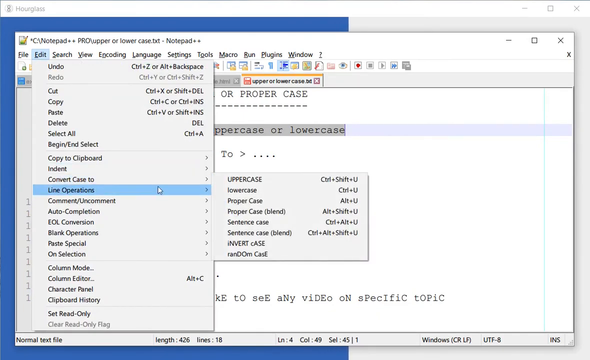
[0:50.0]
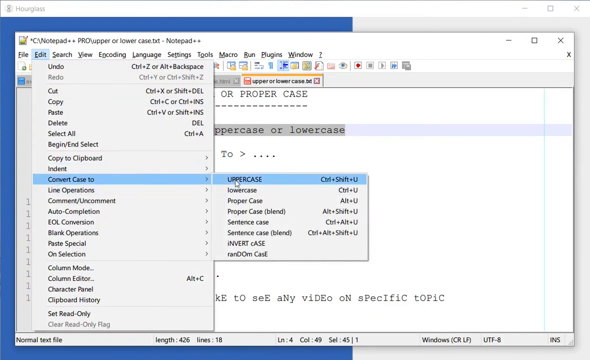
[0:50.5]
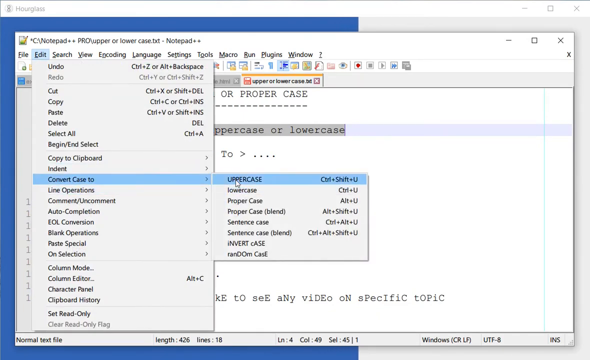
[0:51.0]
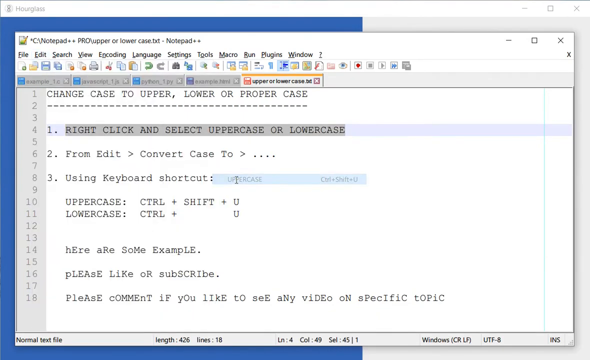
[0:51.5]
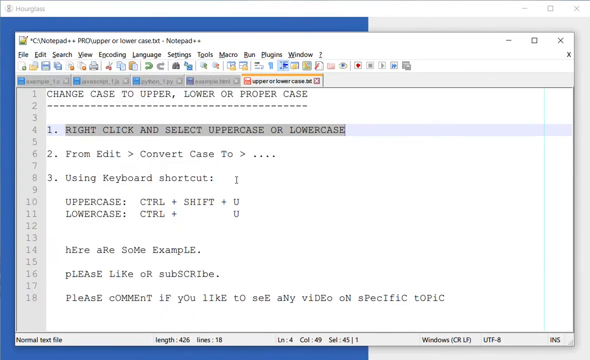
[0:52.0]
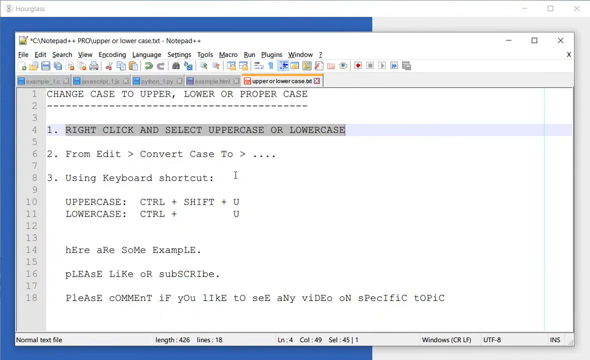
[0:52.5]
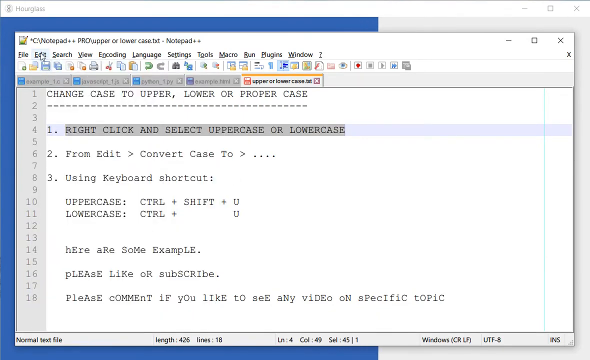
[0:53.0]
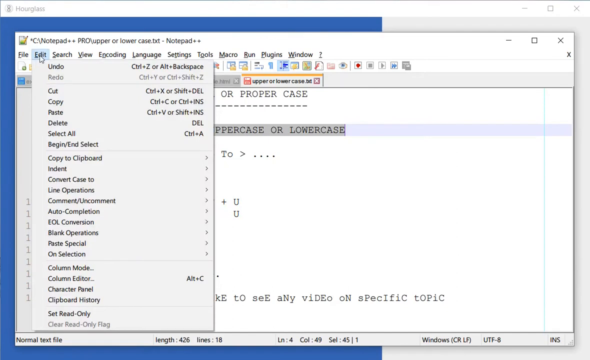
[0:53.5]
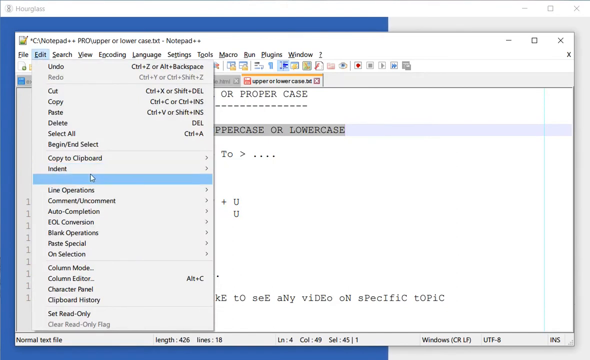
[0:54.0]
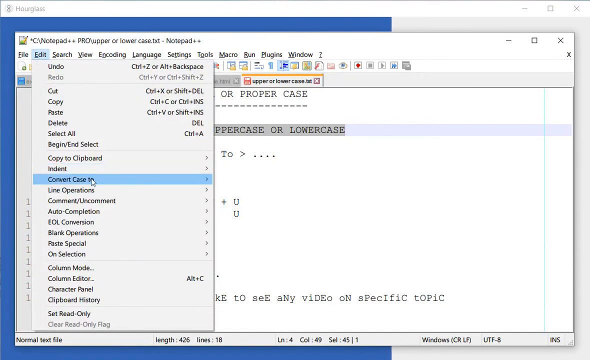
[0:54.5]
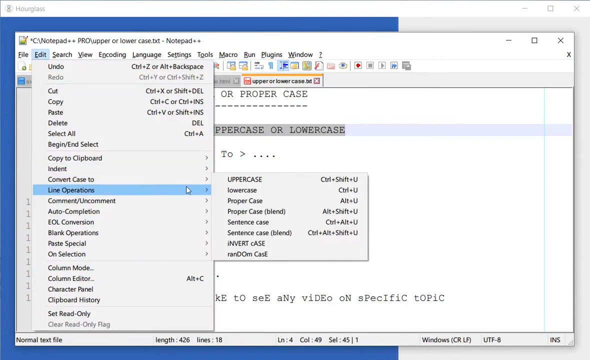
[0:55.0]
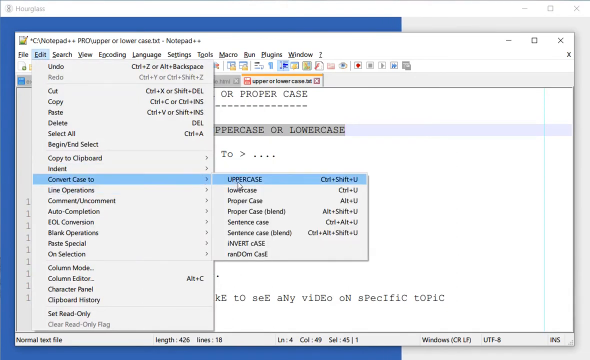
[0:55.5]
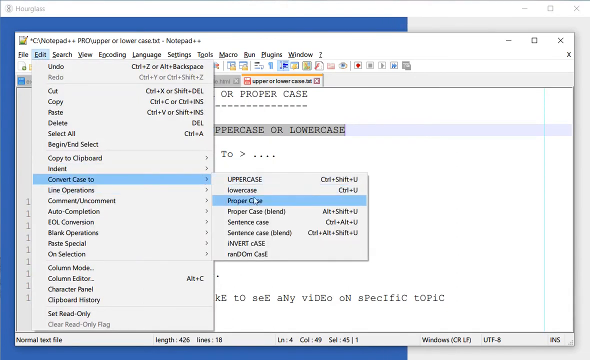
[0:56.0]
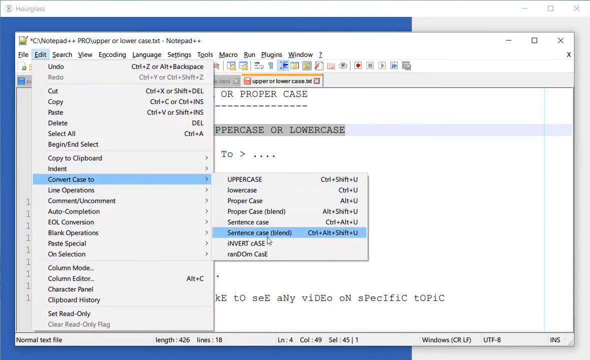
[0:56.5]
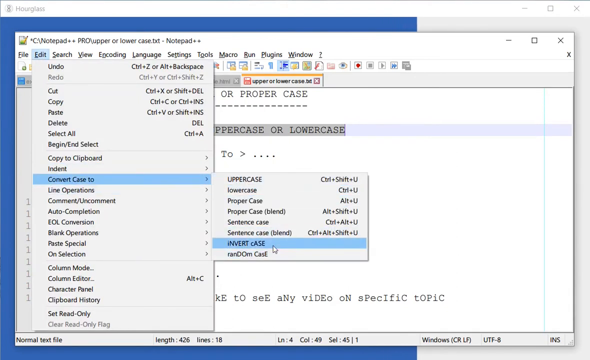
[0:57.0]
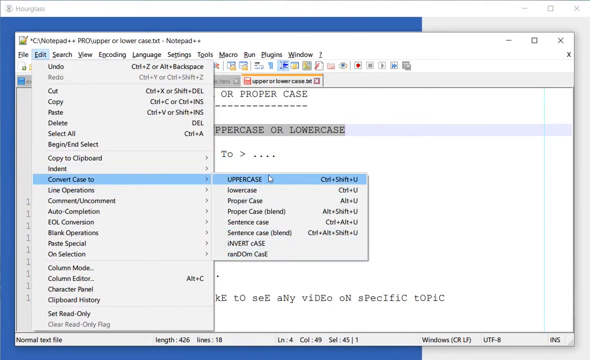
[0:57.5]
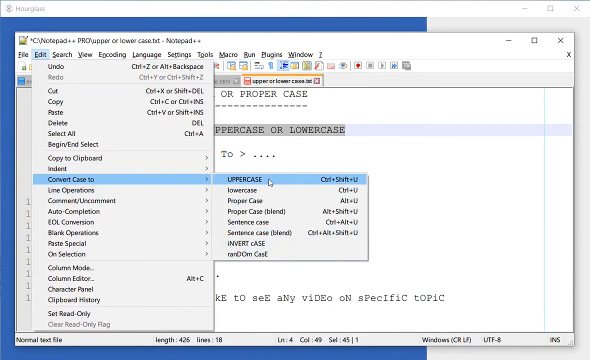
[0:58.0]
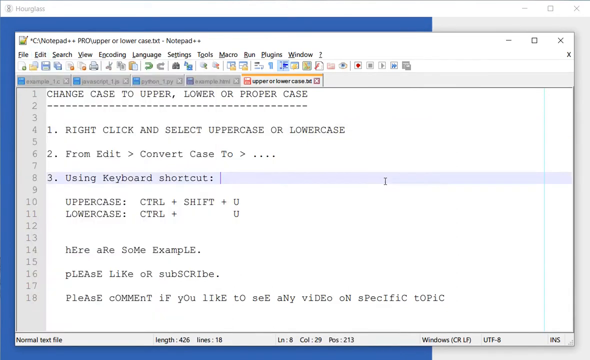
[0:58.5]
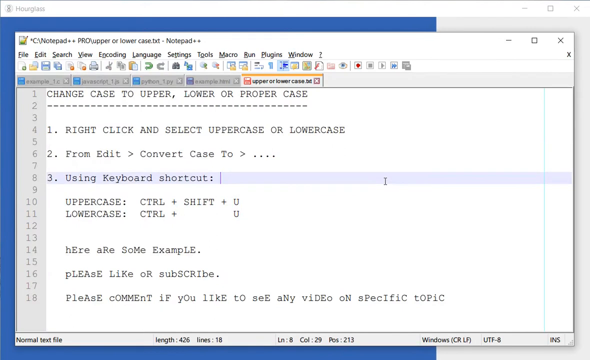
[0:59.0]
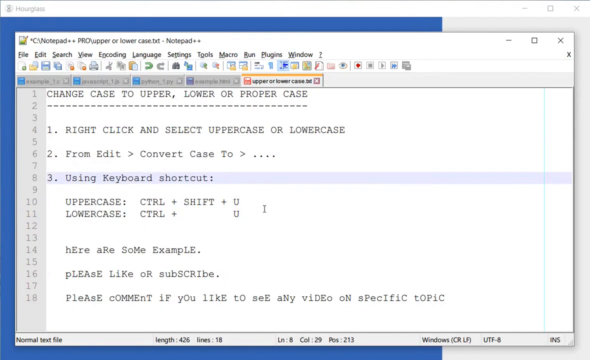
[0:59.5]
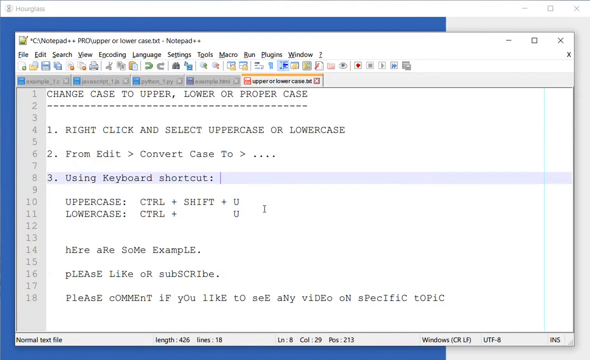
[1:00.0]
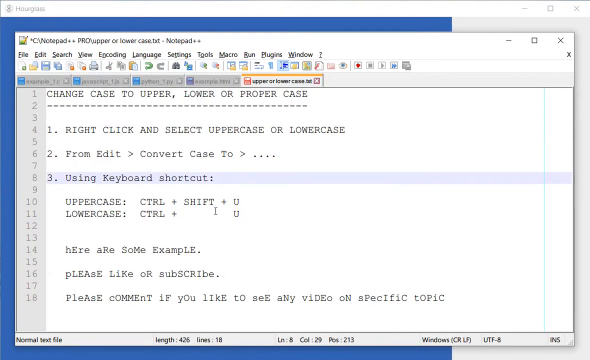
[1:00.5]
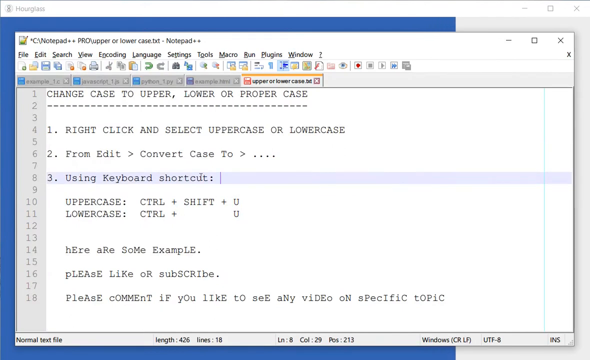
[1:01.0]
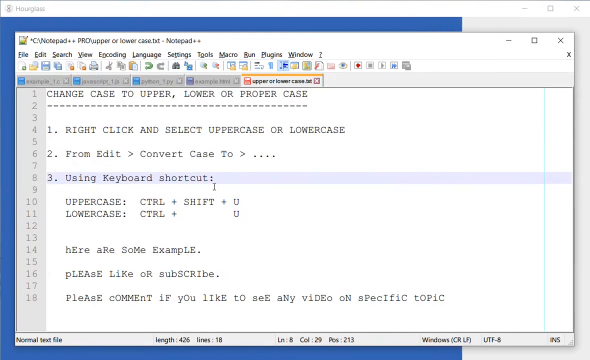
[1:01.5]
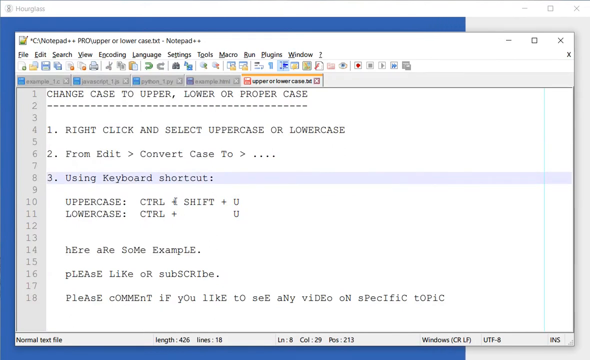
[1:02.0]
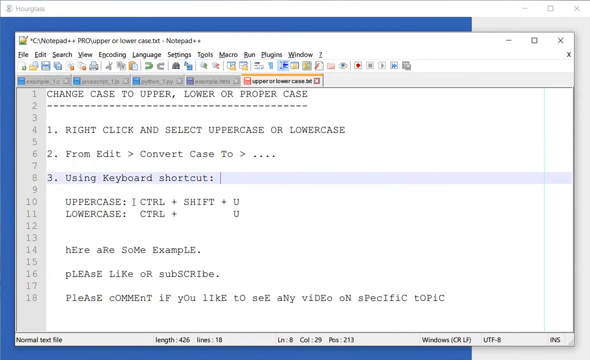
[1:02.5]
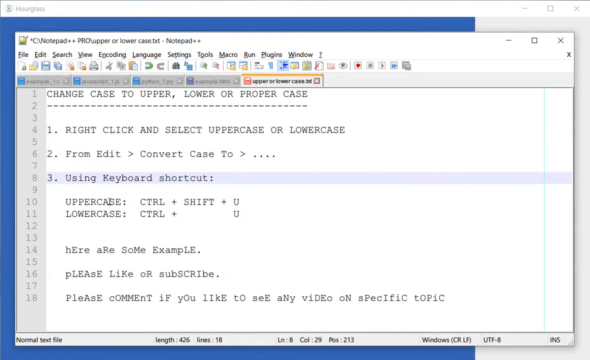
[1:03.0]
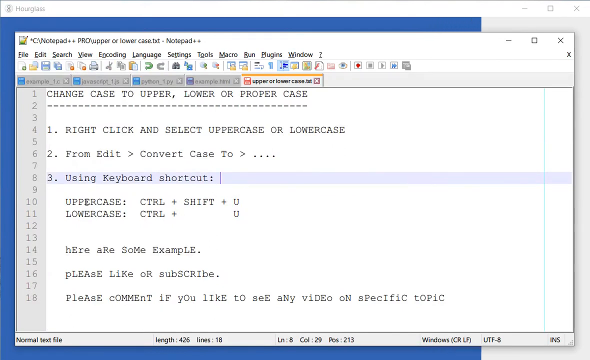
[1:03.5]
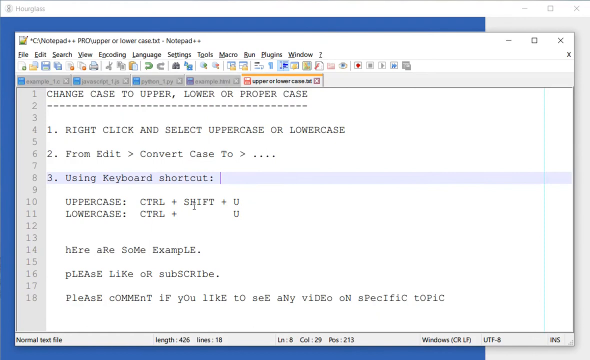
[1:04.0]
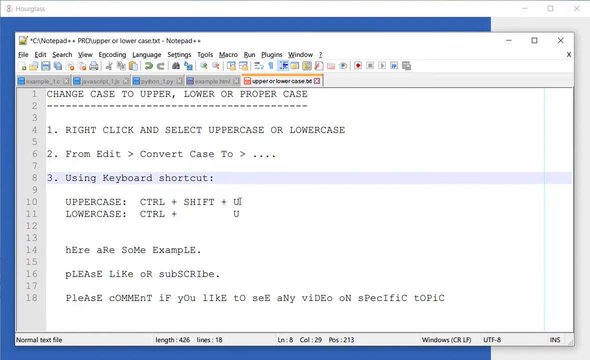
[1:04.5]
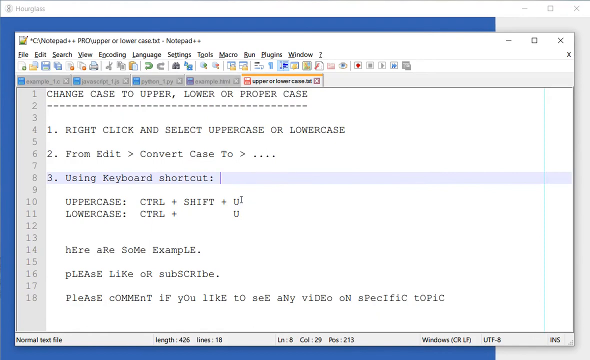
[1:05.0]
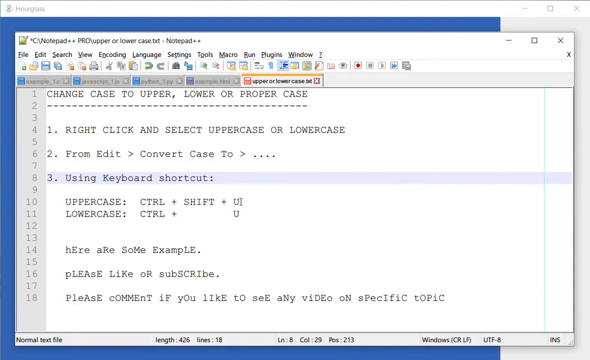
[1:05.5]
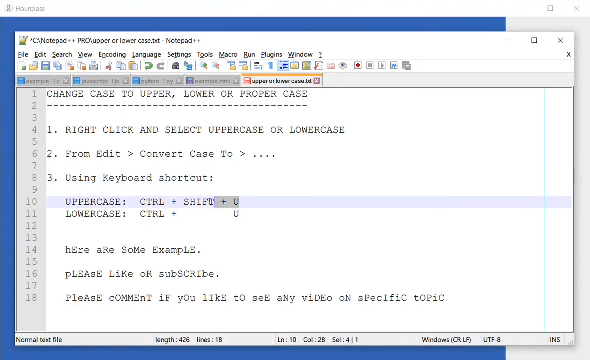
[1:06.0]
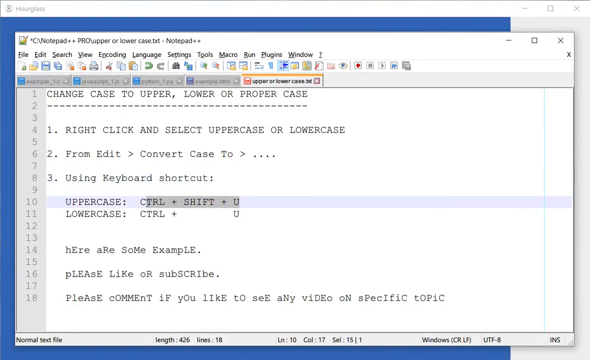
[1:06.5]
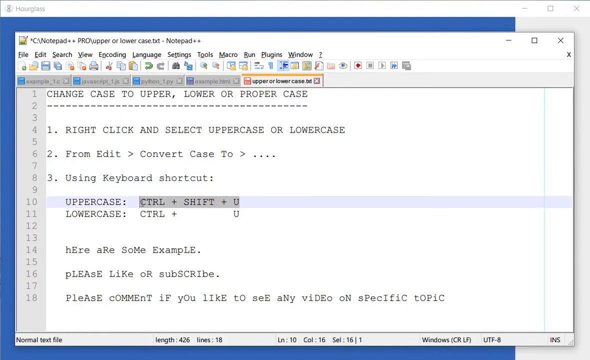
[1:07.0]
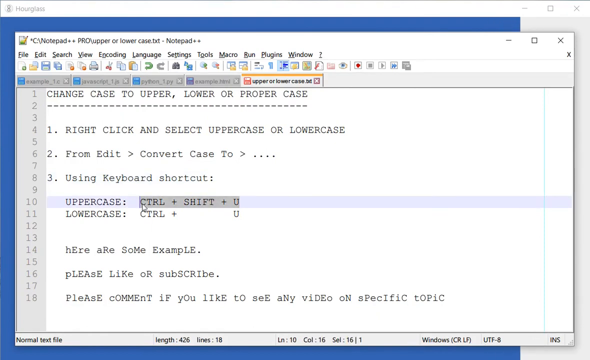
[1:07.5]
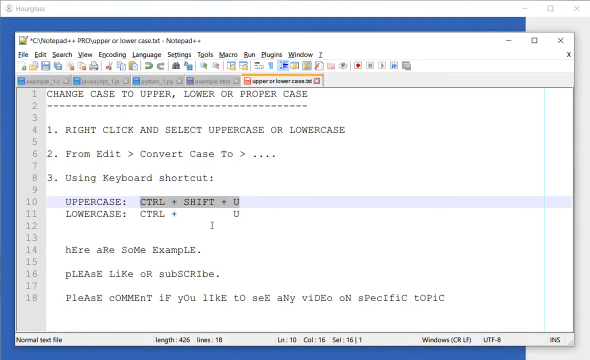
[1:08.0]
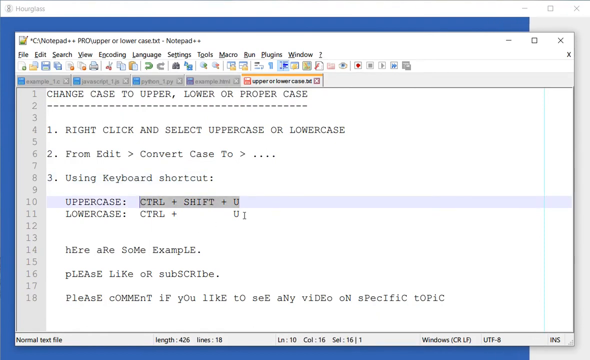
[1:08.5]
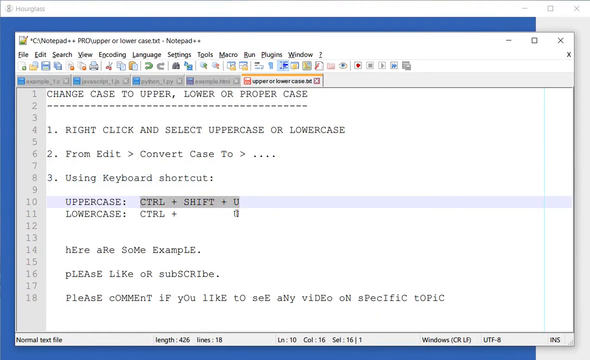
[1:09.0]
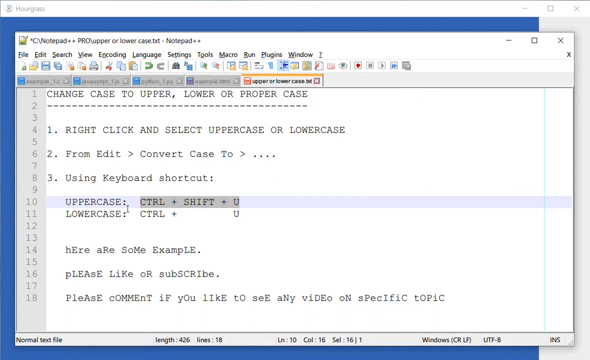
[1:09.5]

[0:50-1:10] The user continues using the toolbar to convert case. The Edit menu's Convert case to options are shown: uppercase, lowercase, proper case, sentence case, invert case, and several other methods. The keyboard shortcuts listed there match what the user typed in the text file: uppercase is Control Shift U and lowercase is Control U. The user converts the case of some of the words, going through the different options, then moves down to the keyboard shortcuts and highlights the uppercase shortcut. The video pauses there as it fades out.